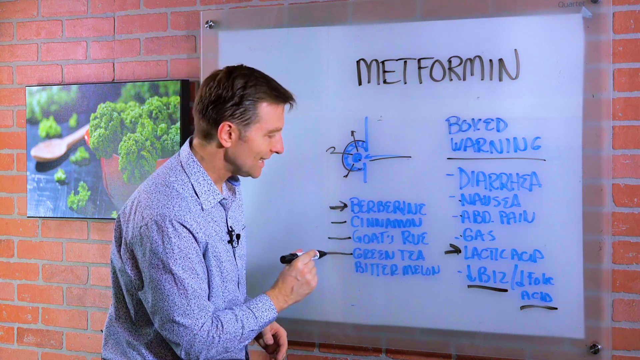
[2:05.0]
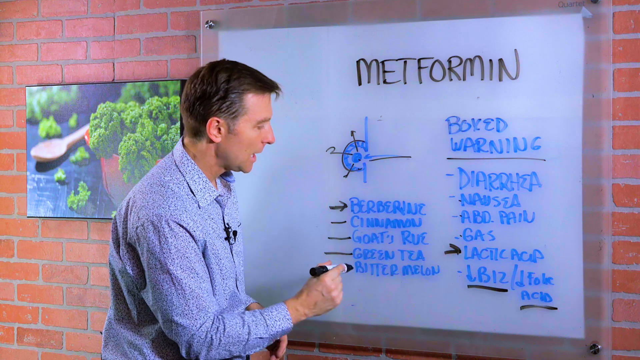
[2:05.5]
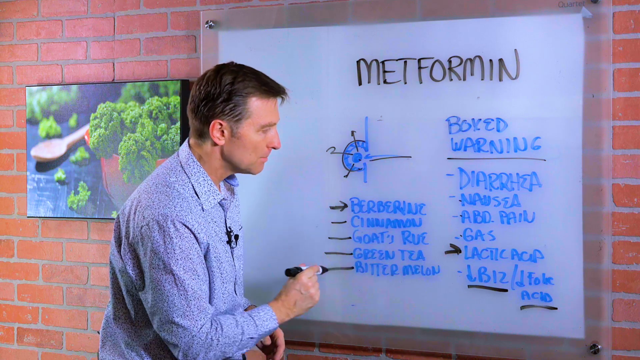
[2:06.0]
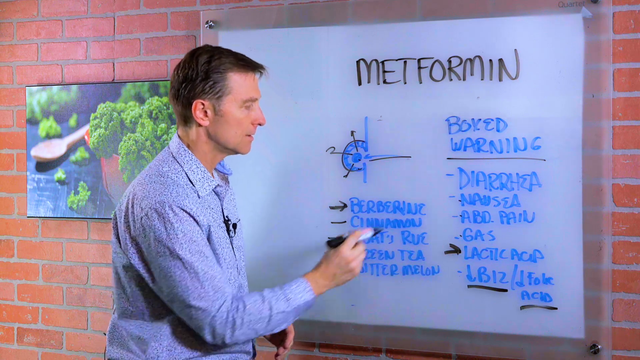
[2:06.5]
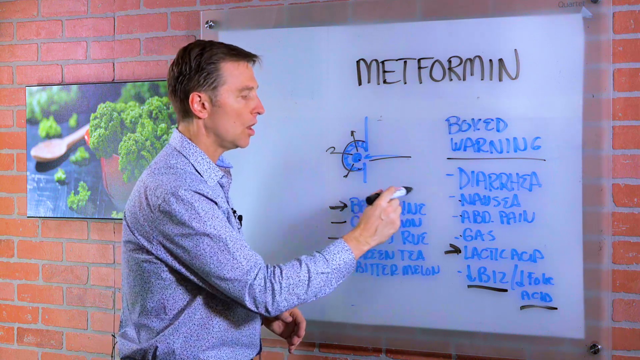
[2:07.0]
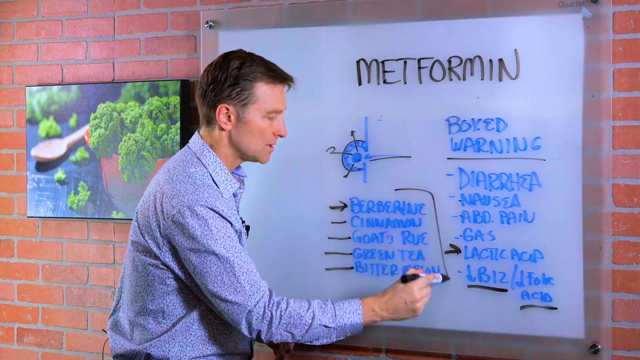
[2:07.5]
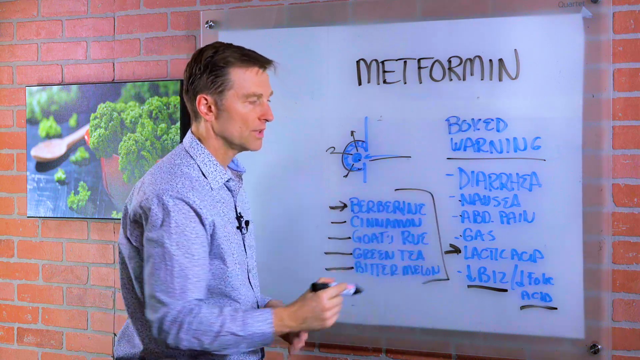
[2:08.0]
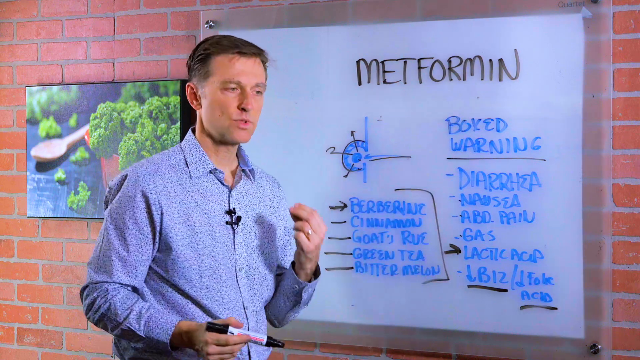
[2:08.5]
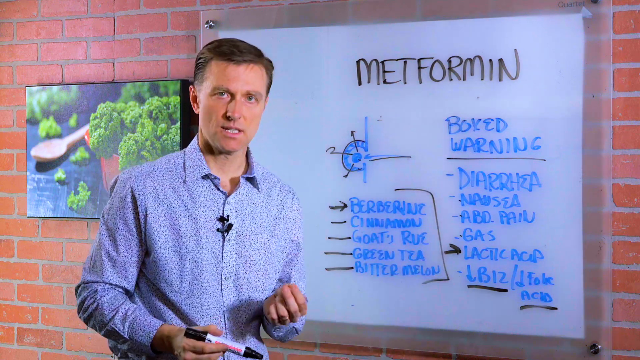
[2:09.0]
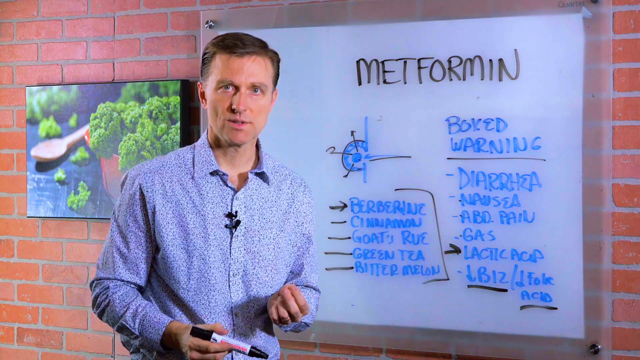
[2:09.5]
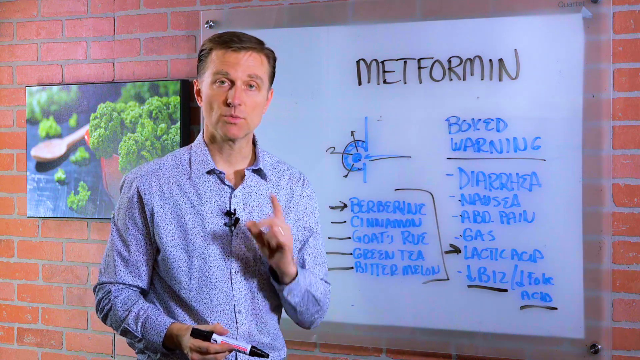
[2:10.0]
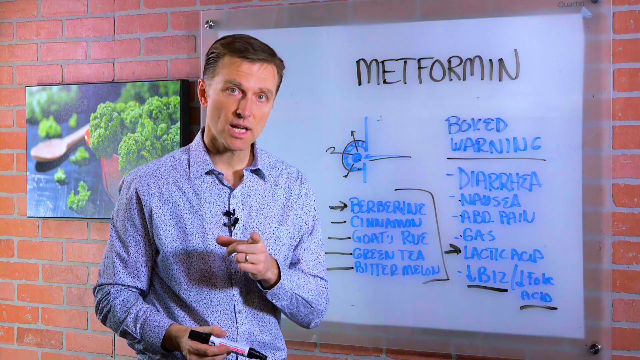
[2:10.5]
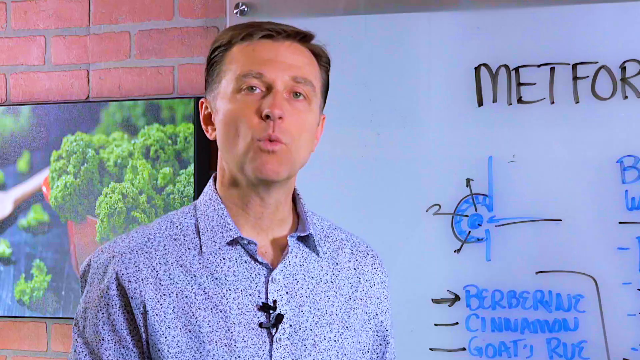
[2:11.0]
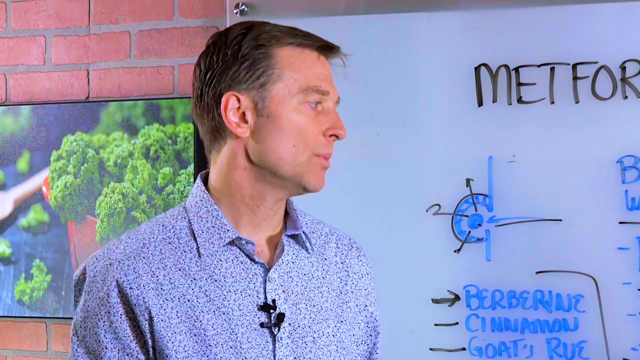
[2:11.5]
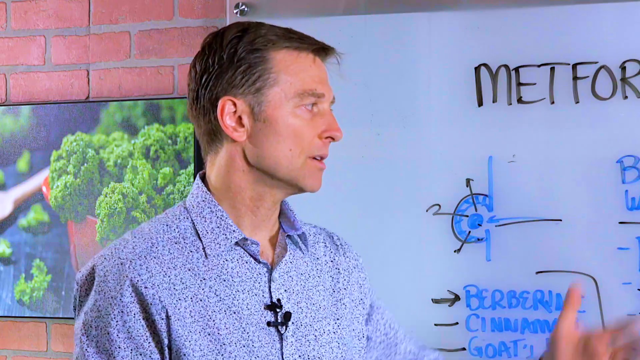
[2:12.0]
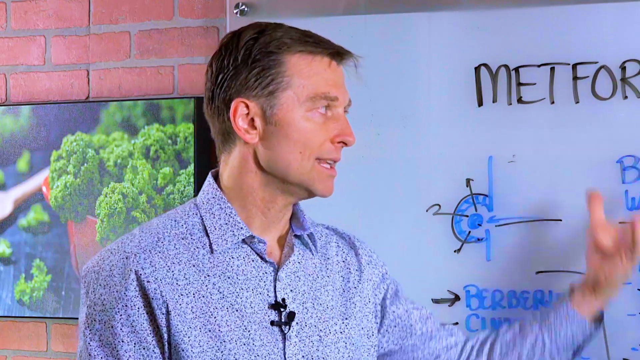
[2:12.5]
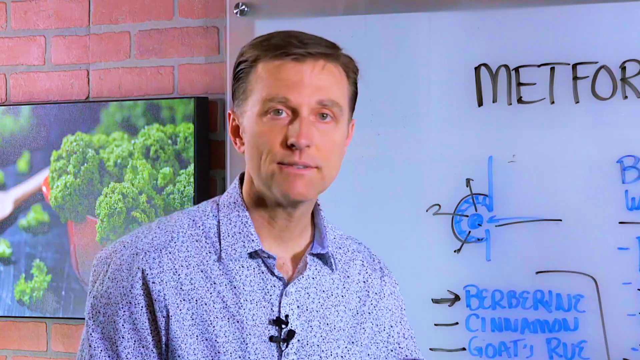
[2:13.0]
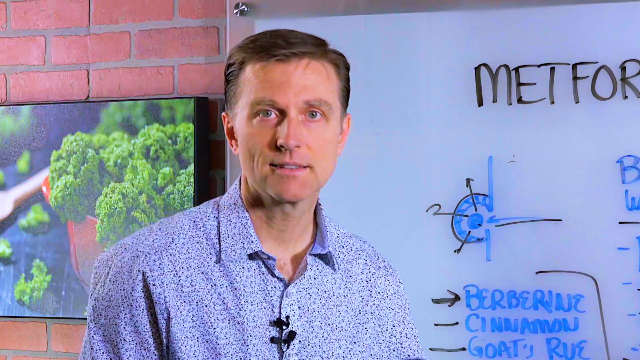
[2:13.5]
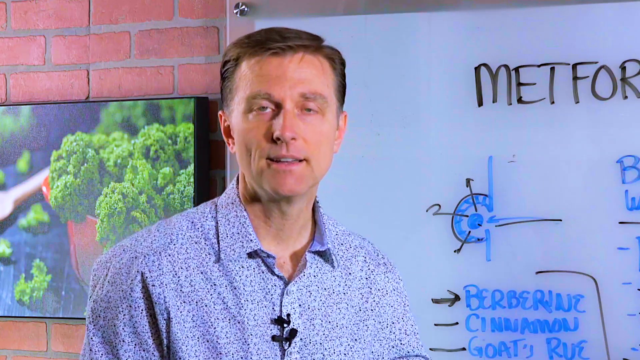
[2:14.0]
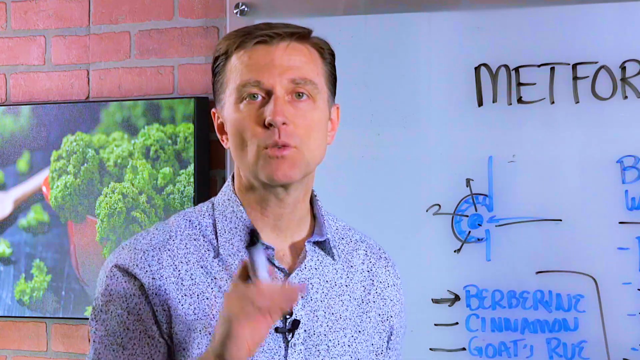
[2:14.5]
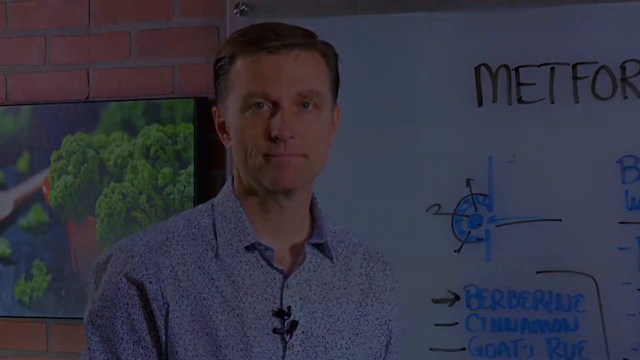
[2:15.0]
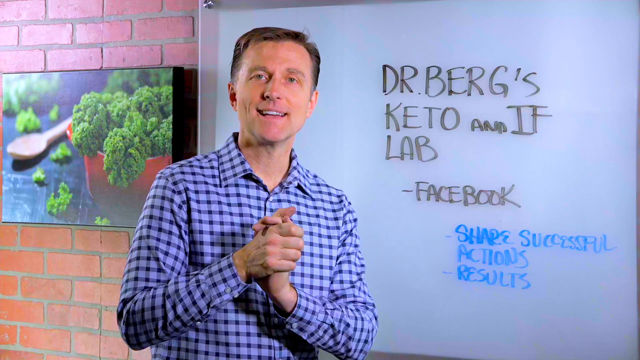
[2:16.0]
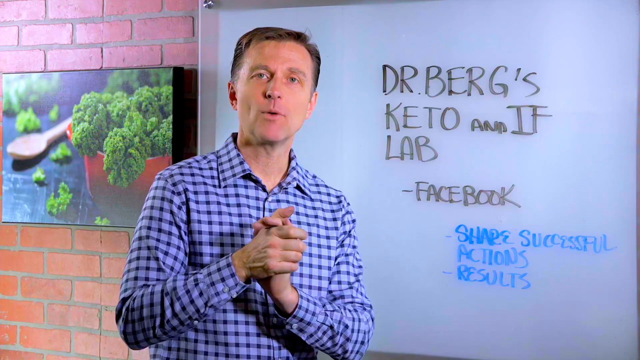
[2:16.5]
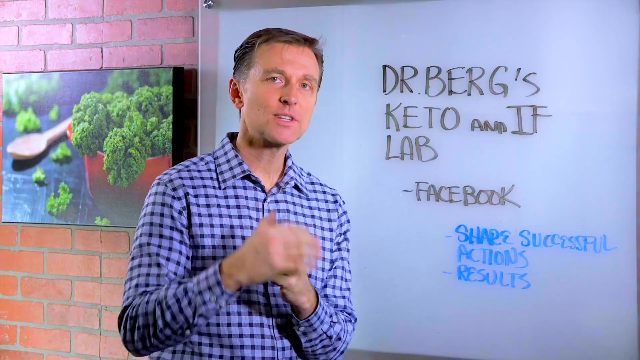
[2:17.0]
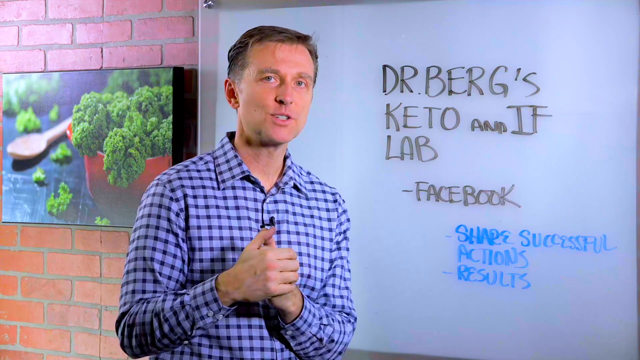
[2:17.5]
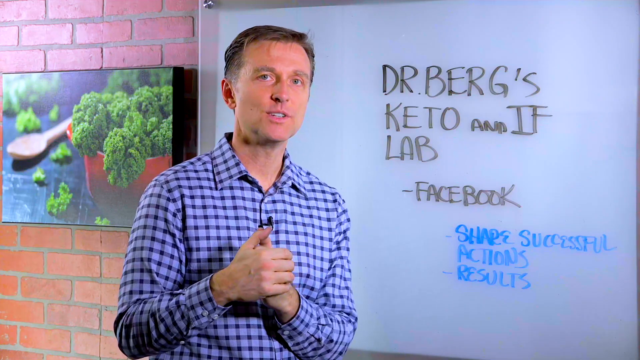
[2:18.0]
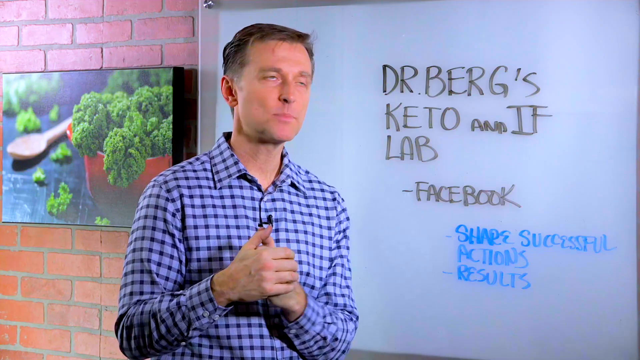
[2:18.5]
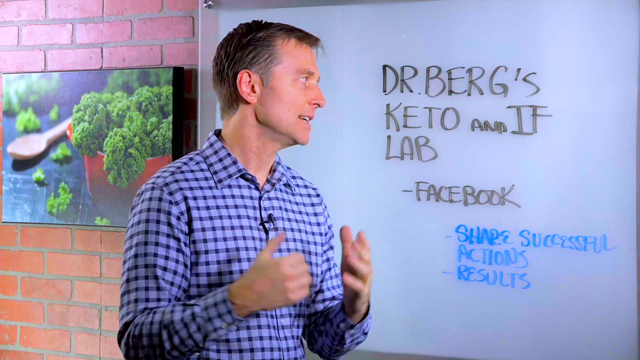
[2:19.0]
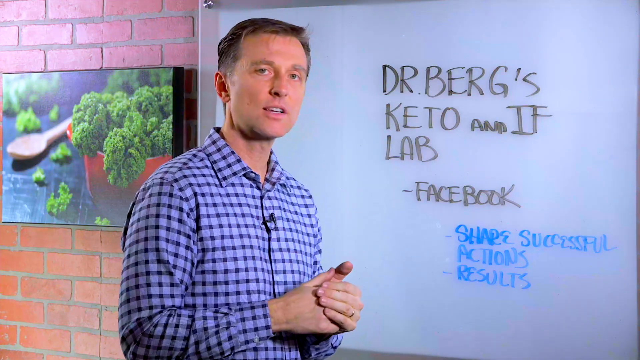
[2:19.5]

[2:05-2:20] The man continues making lines next to individual ingredients. The camera pulls out and then goes back in on him. He underlines the entire portion and draws a bracket on the right-hand side of the left-hand column; each item now has an arrow next to it. He turns back to the camera and appears to give a closing statement, summarizing by pointing first to the bracketed items in the left column, then to the items in the right-hand boxed warning column. He draws his hand from top to bottom along the right-side items: "boxed warning, diarrhea, nausea, abdominal pain, gas, lactic acid, B12, and folic acid," with downward arrows next to the last two. The video then moves to a new screen where the man stands in front of a new whiteboard with new text on it.